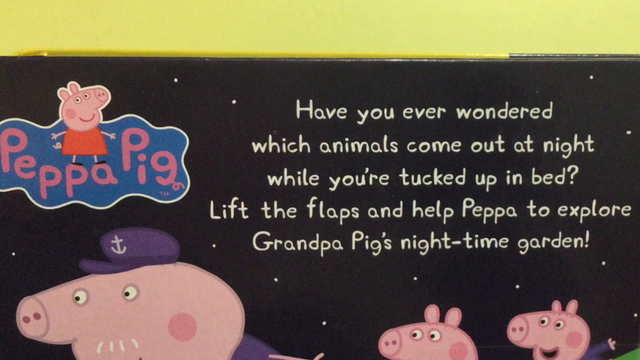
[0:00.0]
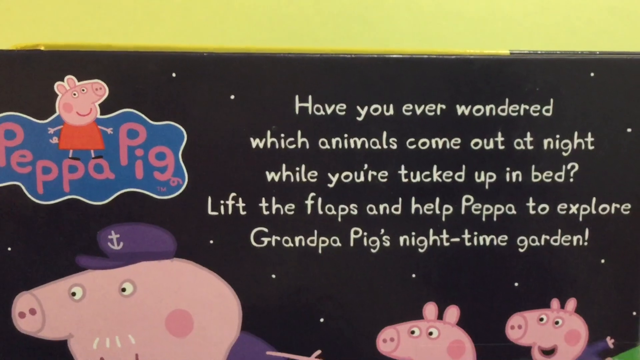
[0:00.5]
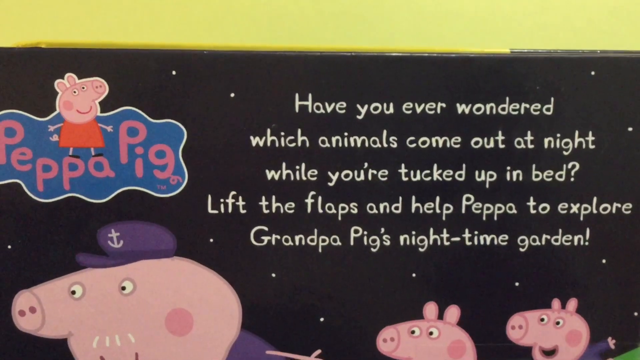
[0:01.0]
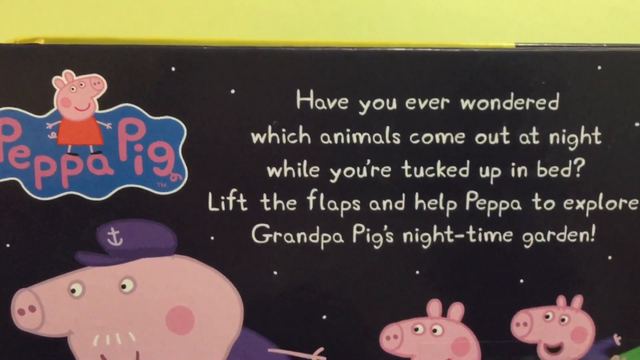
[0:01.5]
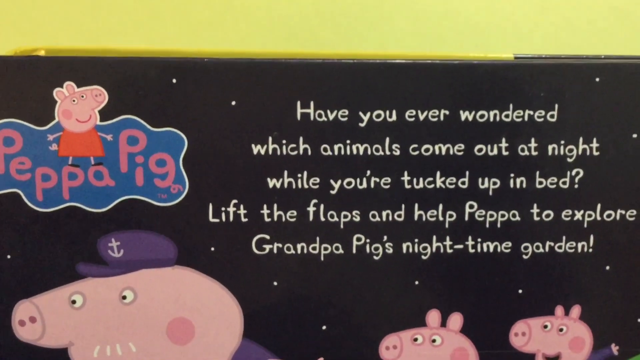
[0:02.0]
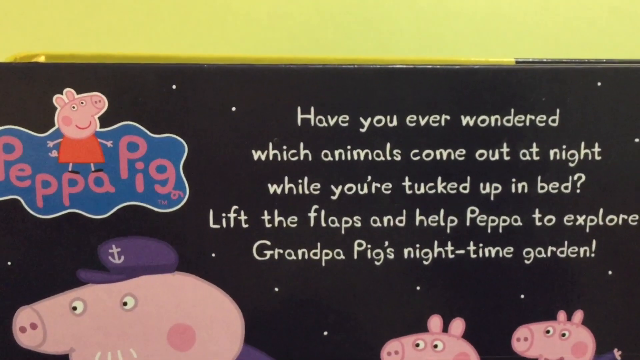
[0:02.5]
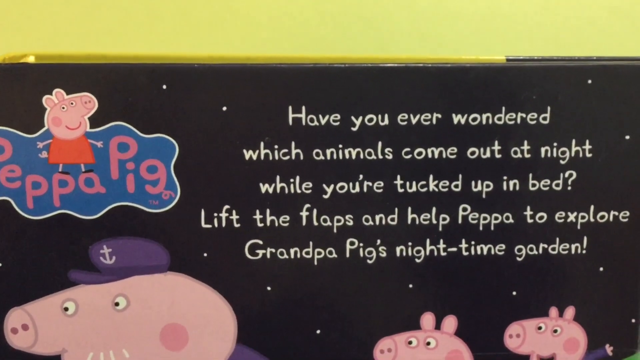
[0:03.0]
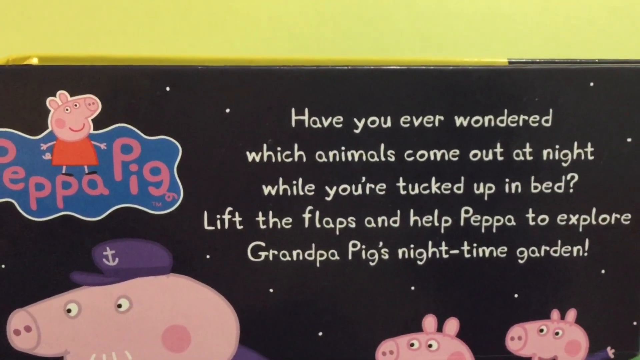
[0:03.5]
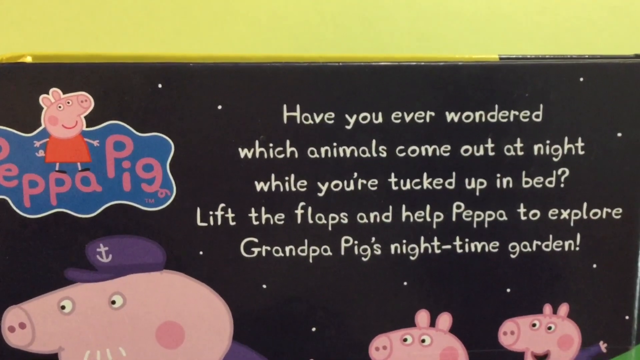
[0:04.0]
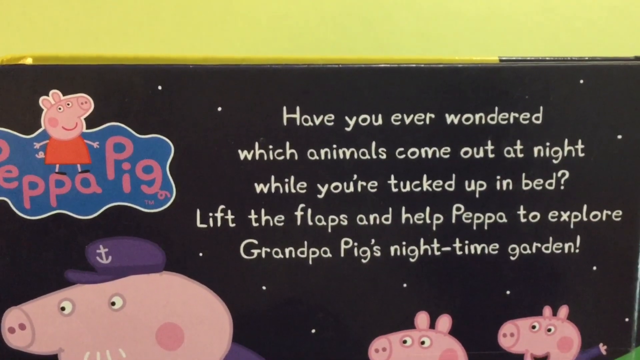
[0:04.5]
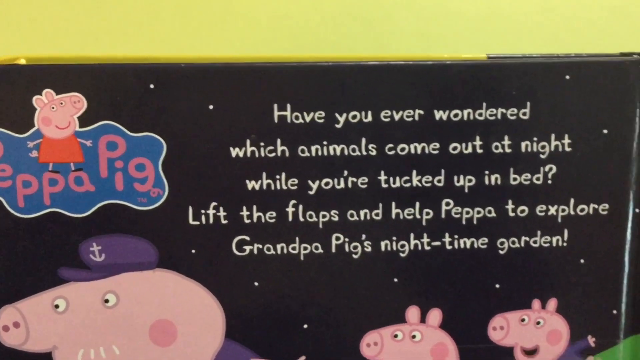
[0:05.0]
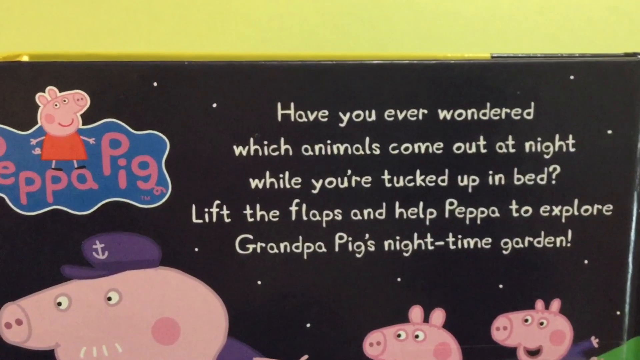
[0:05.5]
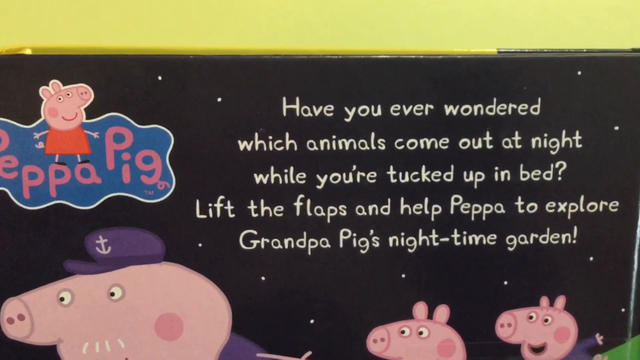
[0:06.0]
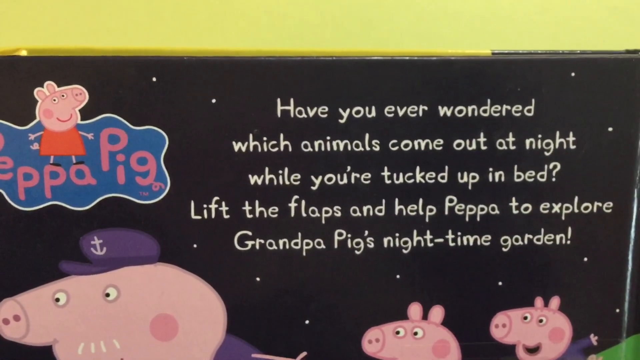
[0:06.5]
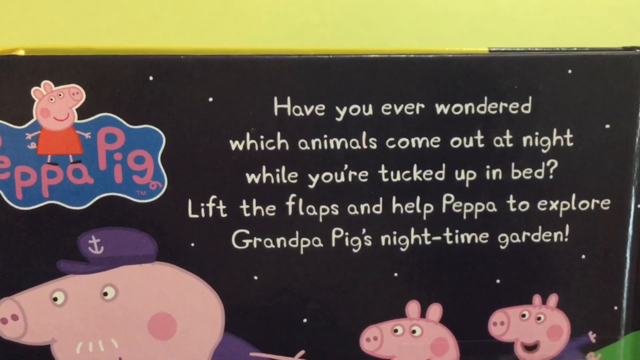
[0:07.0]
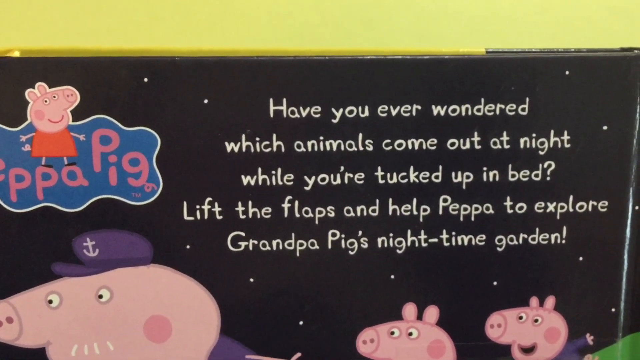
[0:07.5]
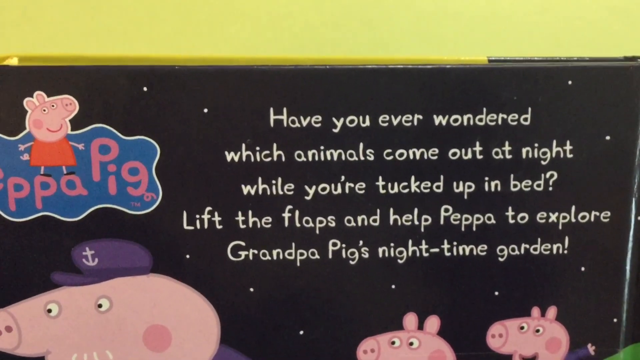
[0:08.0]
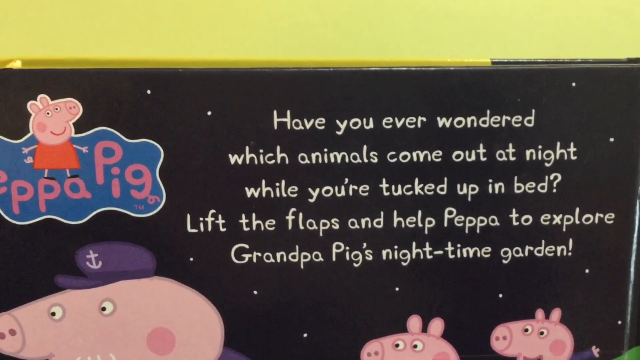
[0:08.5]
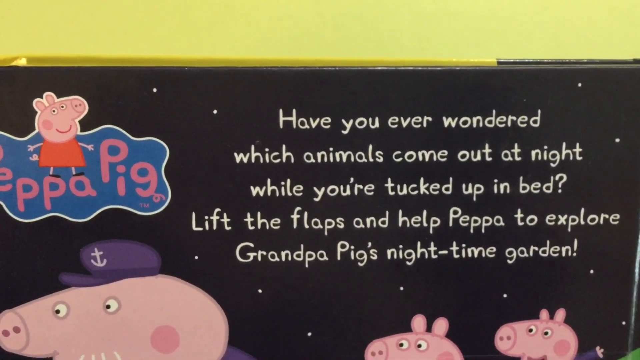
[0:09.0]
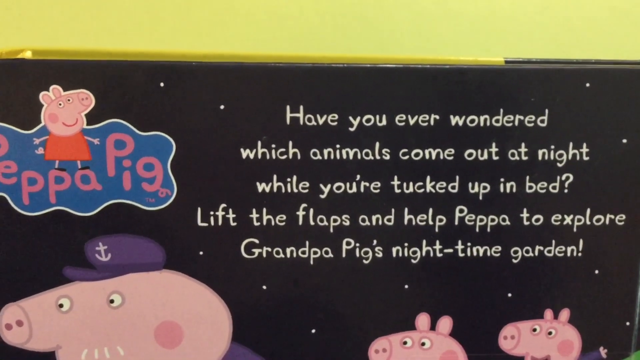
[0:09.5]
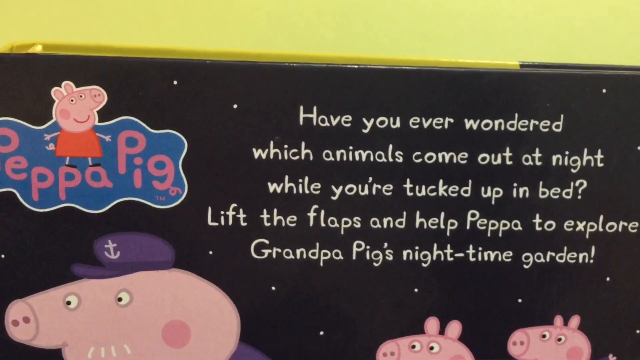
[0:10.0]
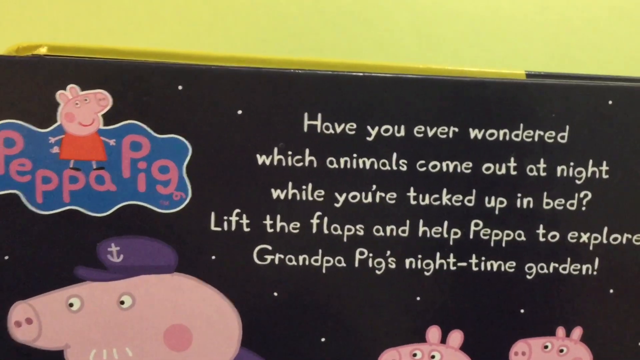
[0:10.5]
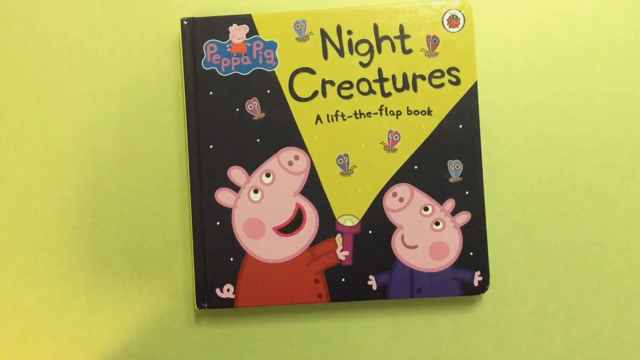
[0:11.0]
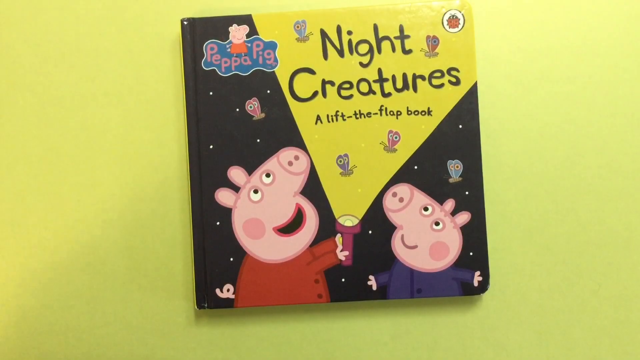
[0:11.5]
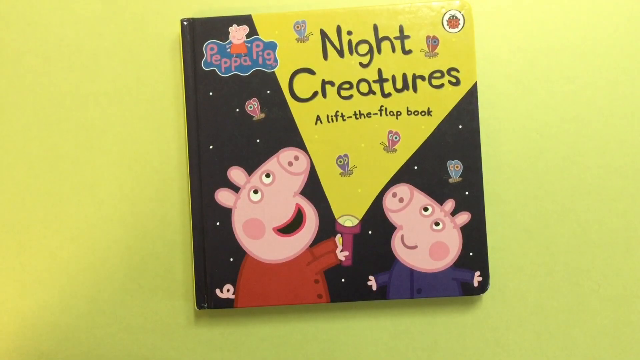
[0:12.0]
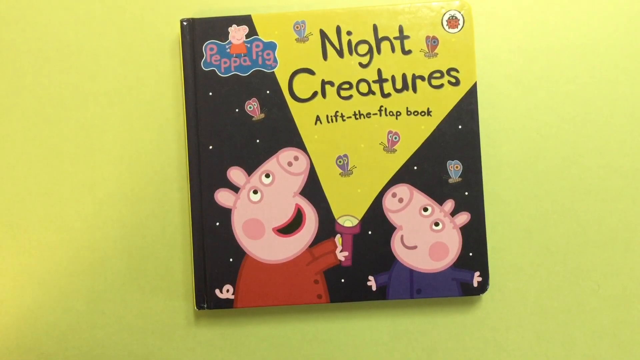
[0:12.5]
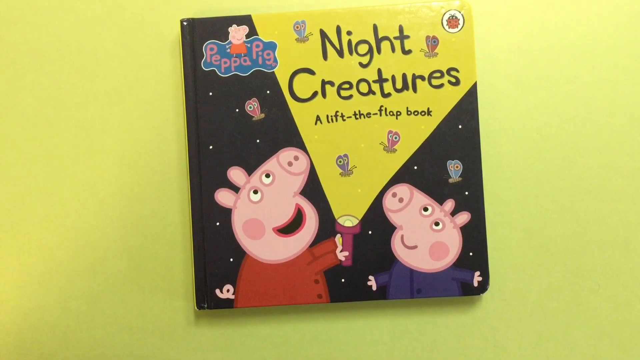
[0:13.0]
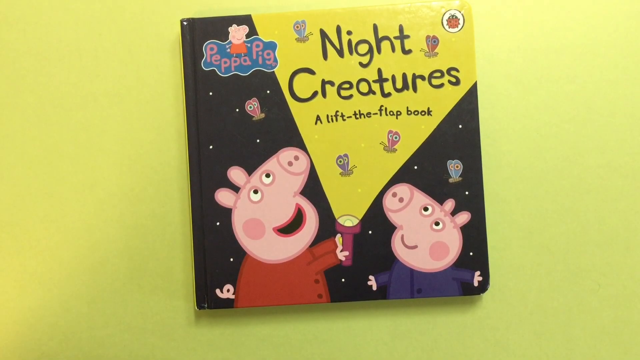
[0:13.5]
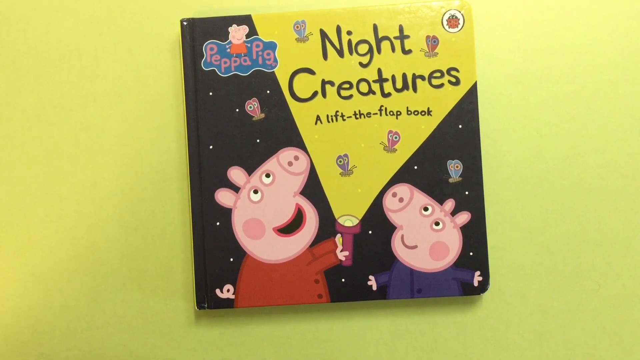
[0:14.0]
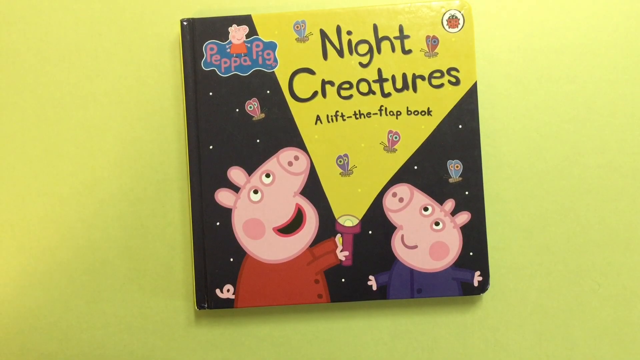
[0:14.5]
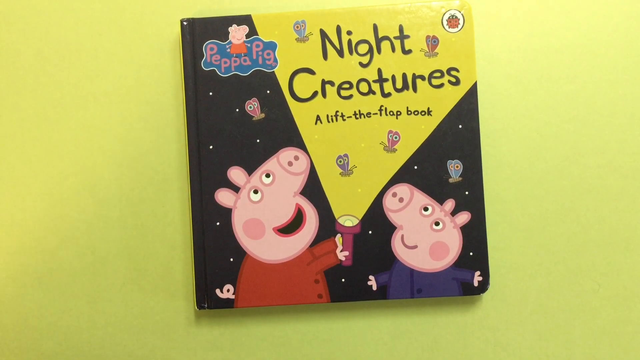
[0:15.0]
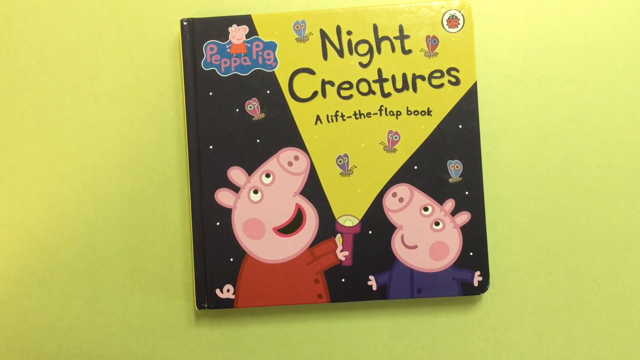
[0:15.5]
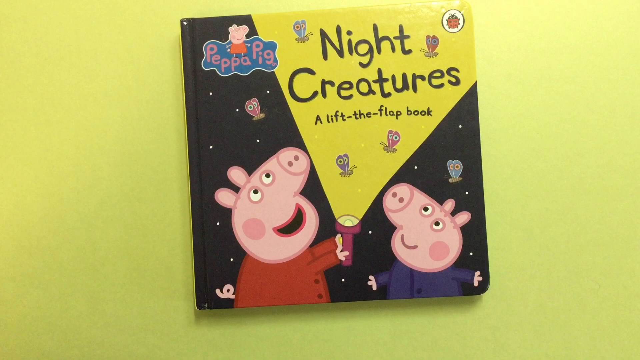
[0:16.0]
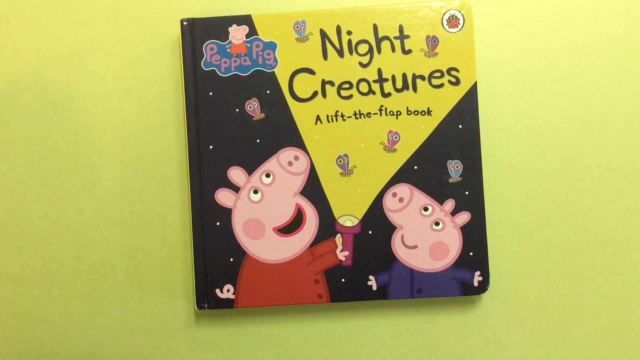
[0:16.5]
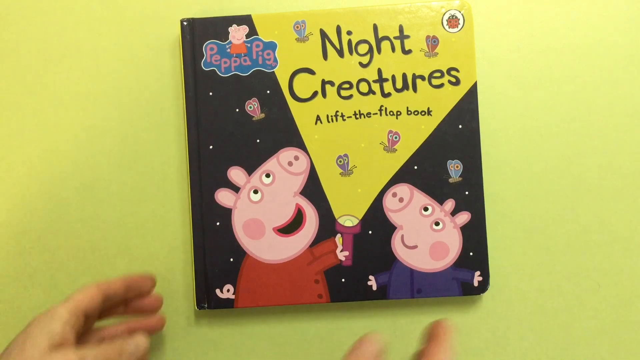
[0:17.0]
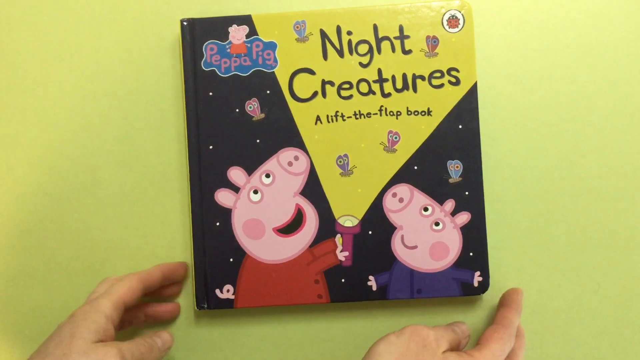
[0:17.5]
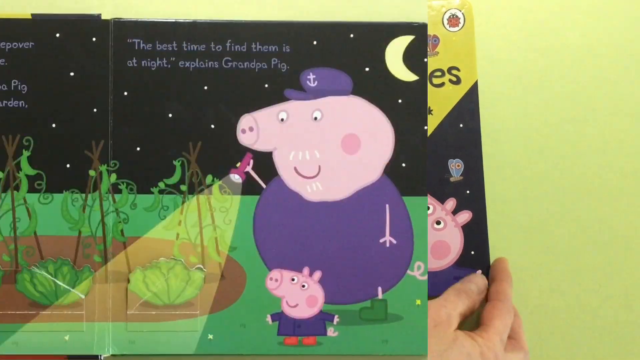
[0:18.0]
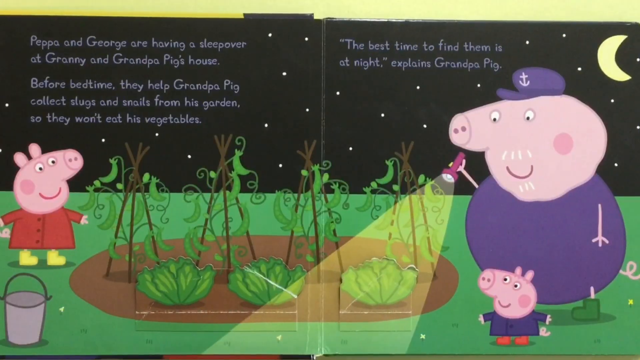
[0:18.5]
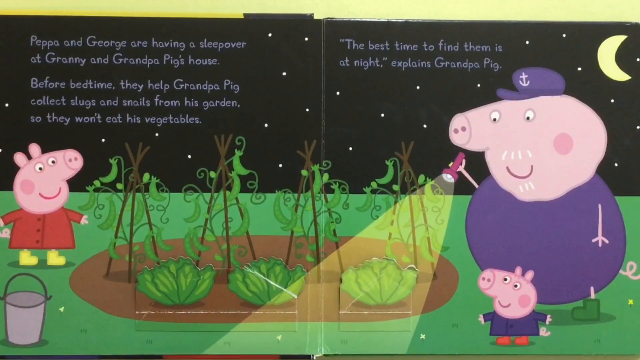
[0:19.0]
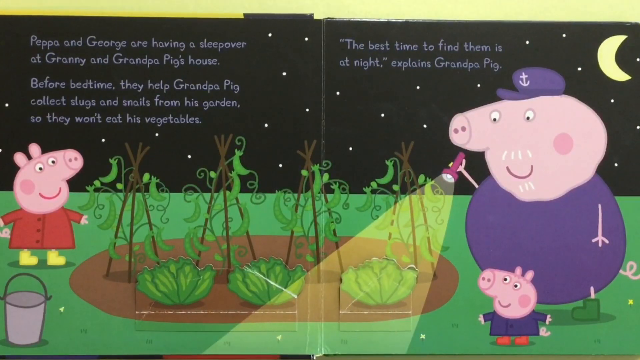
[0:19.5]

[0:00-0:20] A Peppa Pig children's book is shown. Peppa Pig is in the upper left-hand corner; she appears to be a little girl piglet in a red dress and black shoes. To the right, text reads: "have you ever wondered which animals come out at night while you're tucked up in bed? Lift the flaps and help Peppa to explore Grandpa Pig's nighttime garden." Grandpa Pig wears a purple sailor hat, and two little pigs are behind him, out at night. Then a picture of the book, Peppa Pig, Night Creatures, appears, showing the two little pigs looking up at the night sky. The pig with the red arm holds a flashlight, its light going up into the night sky.